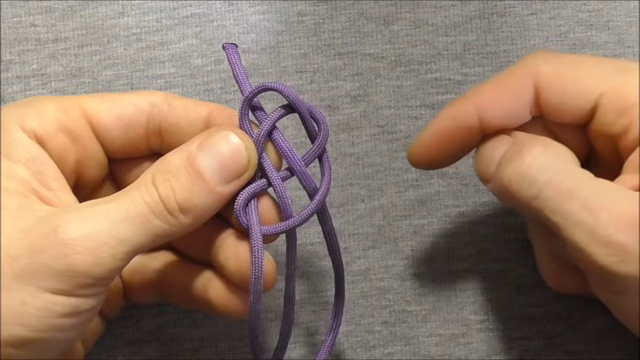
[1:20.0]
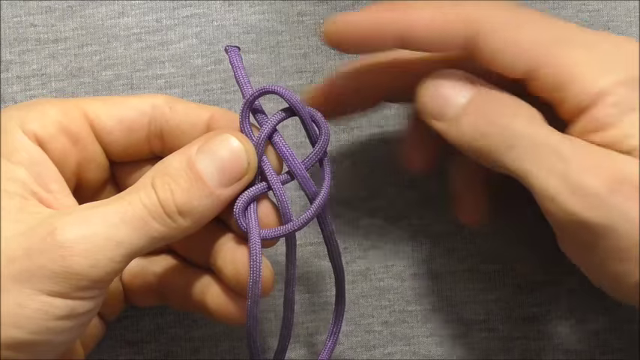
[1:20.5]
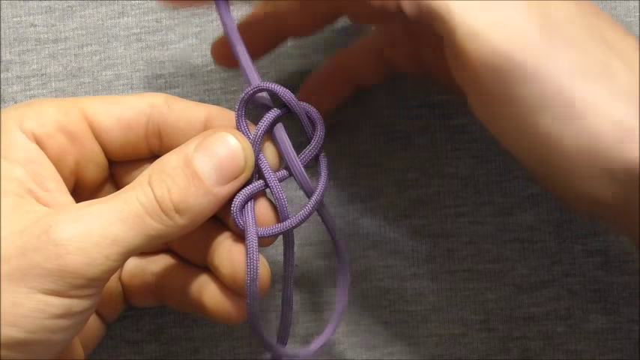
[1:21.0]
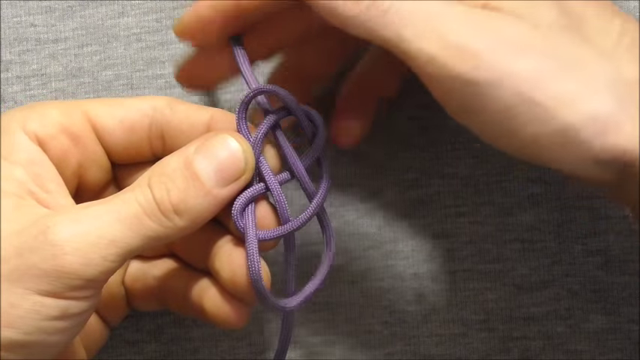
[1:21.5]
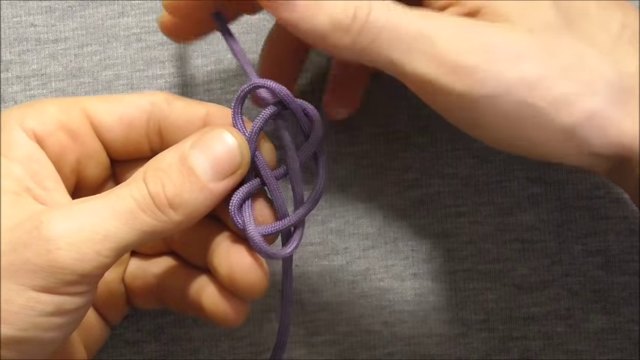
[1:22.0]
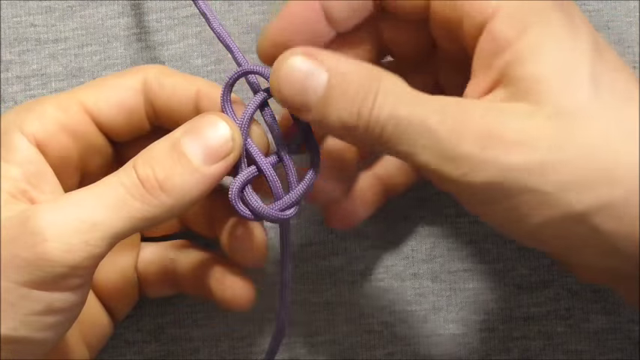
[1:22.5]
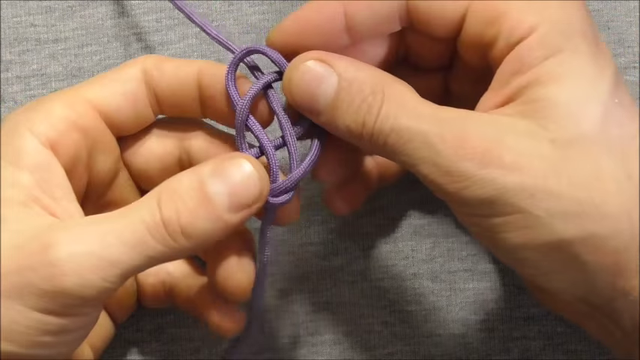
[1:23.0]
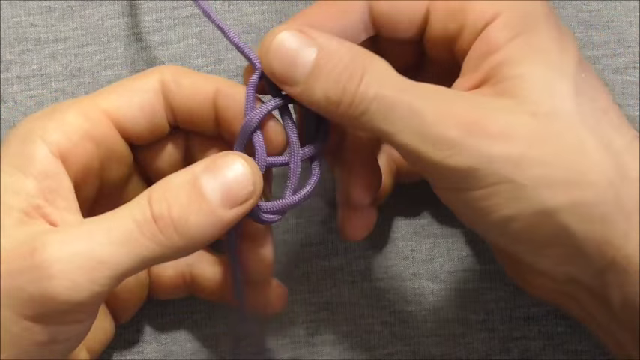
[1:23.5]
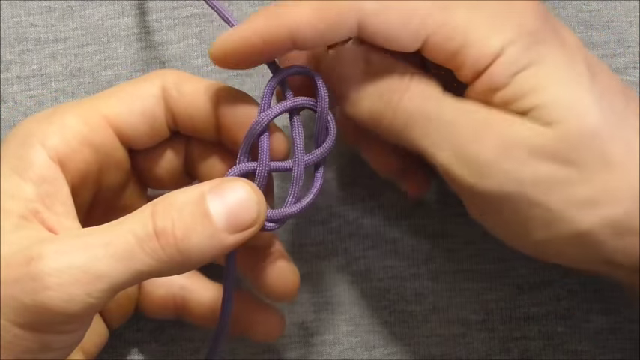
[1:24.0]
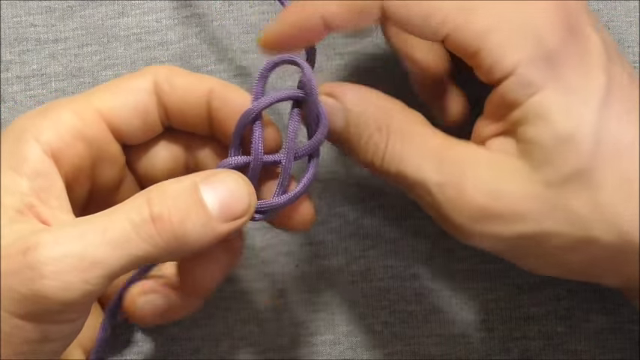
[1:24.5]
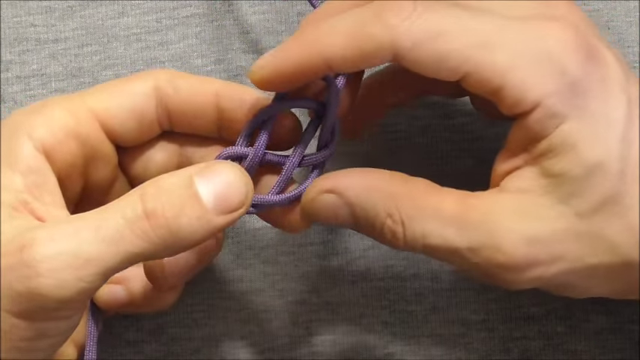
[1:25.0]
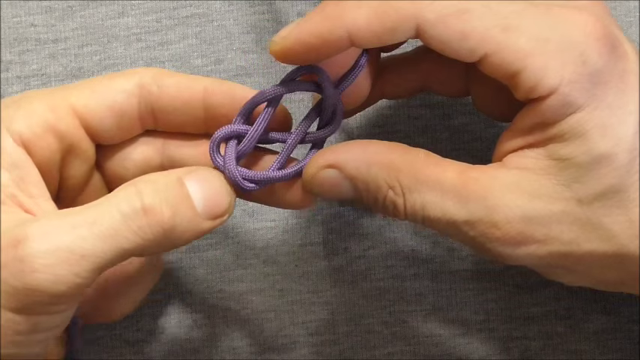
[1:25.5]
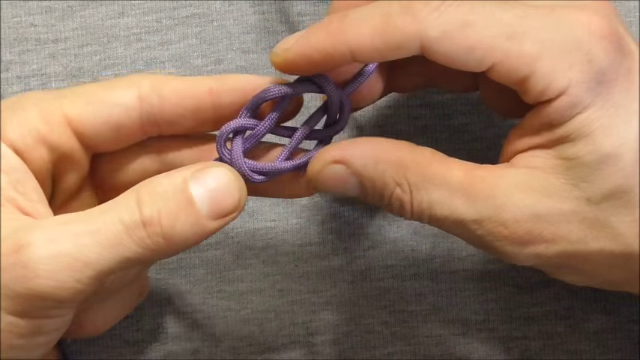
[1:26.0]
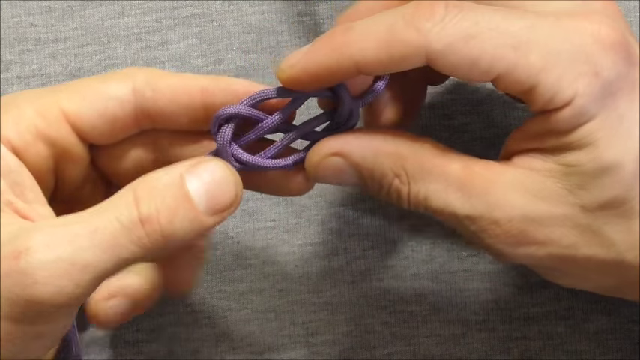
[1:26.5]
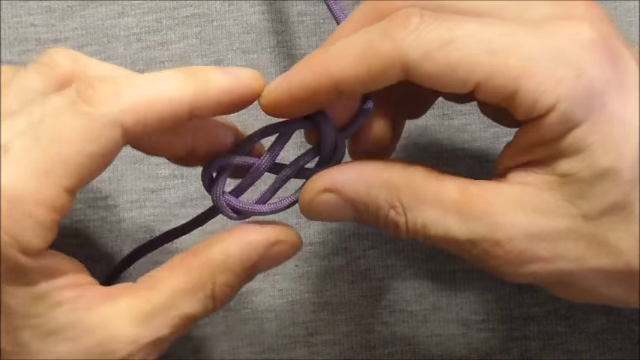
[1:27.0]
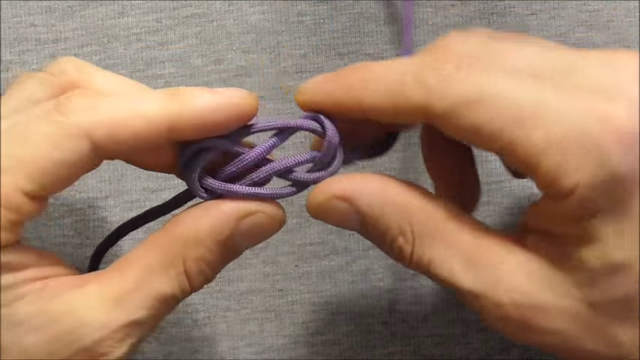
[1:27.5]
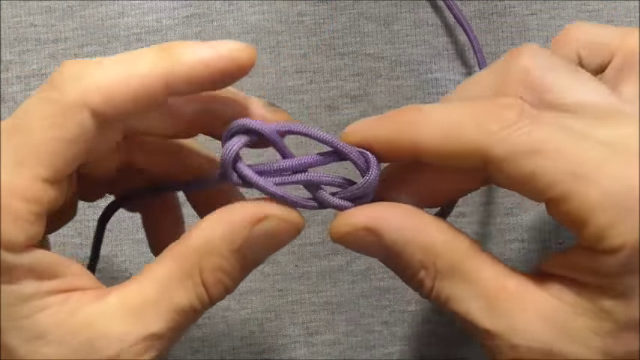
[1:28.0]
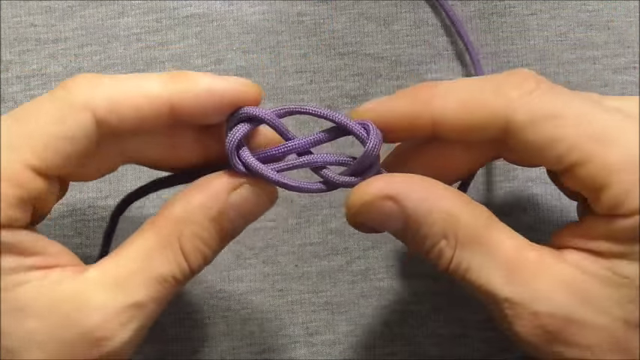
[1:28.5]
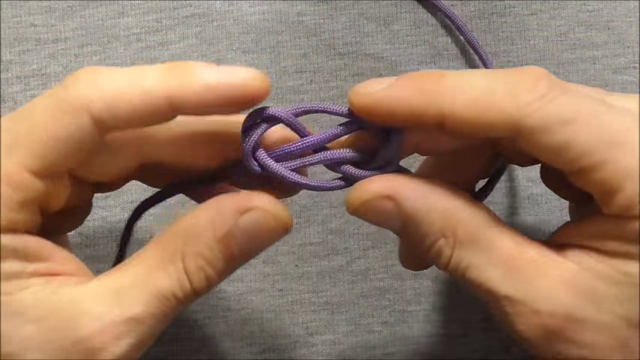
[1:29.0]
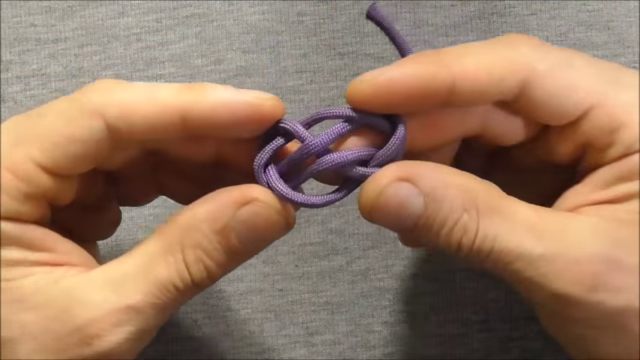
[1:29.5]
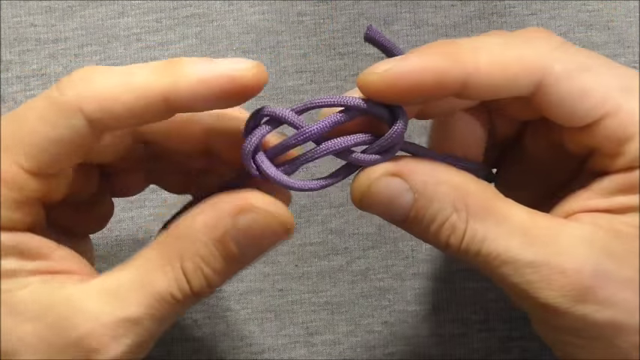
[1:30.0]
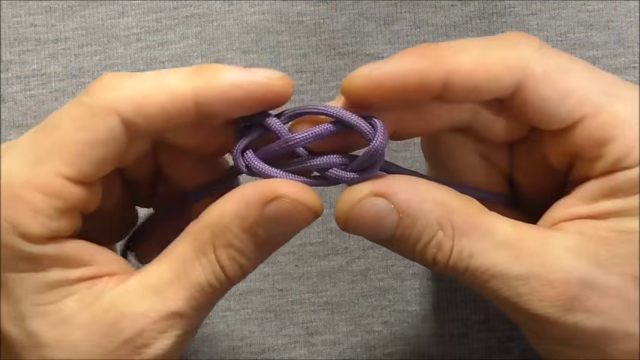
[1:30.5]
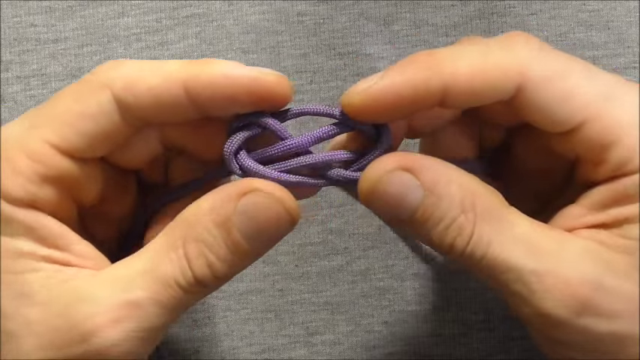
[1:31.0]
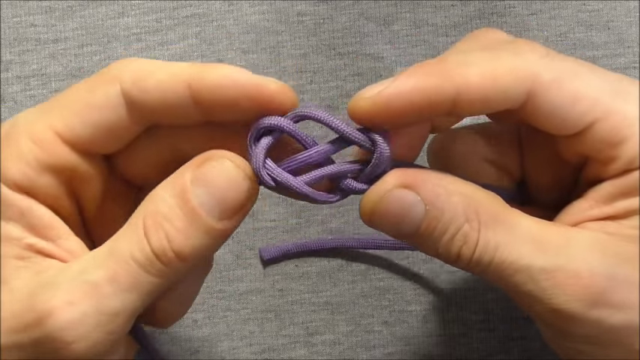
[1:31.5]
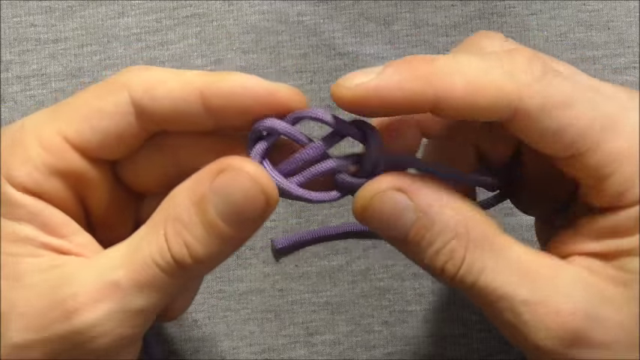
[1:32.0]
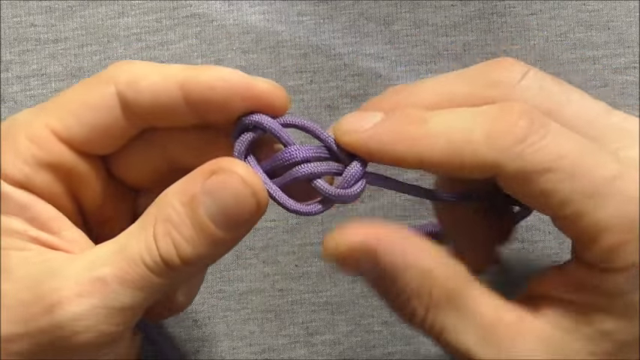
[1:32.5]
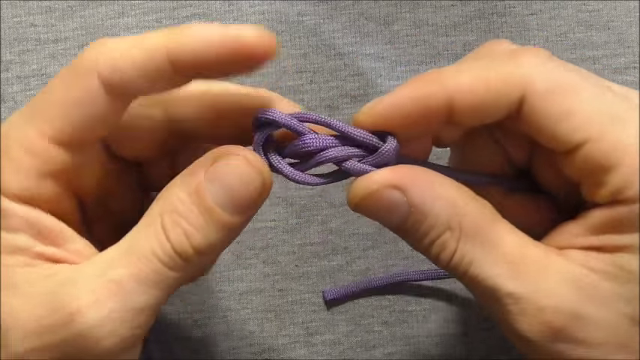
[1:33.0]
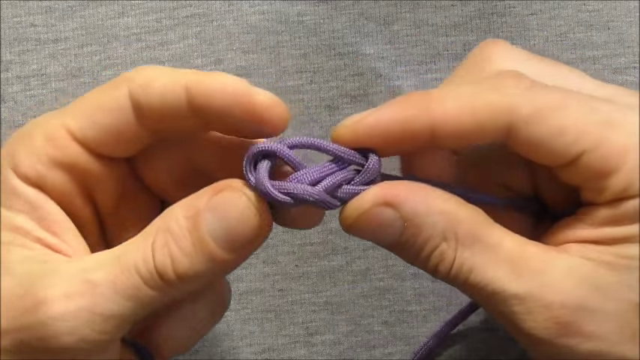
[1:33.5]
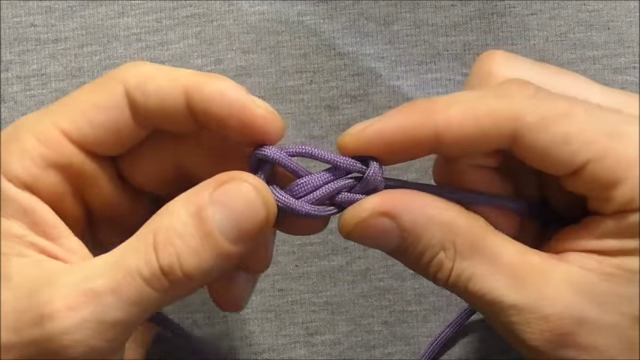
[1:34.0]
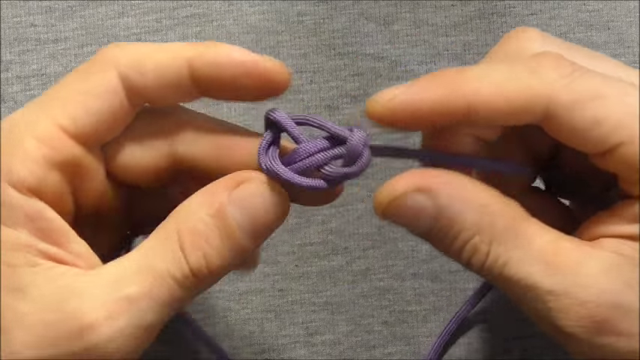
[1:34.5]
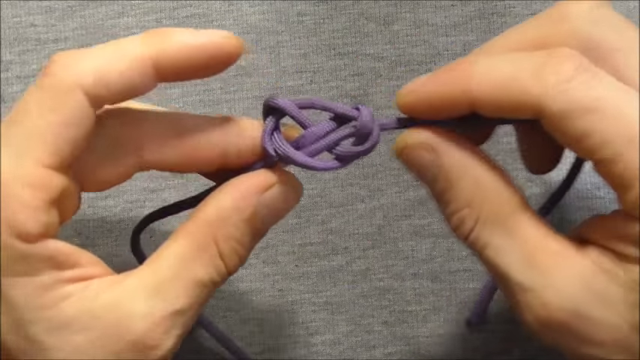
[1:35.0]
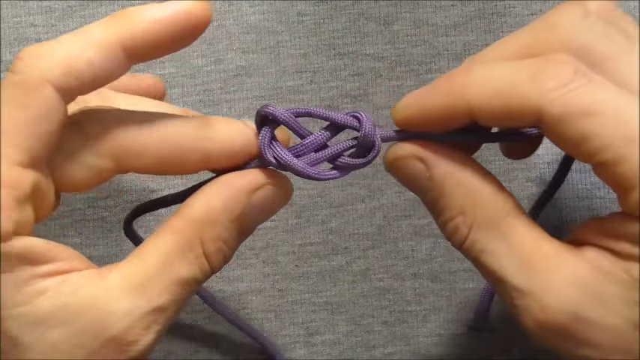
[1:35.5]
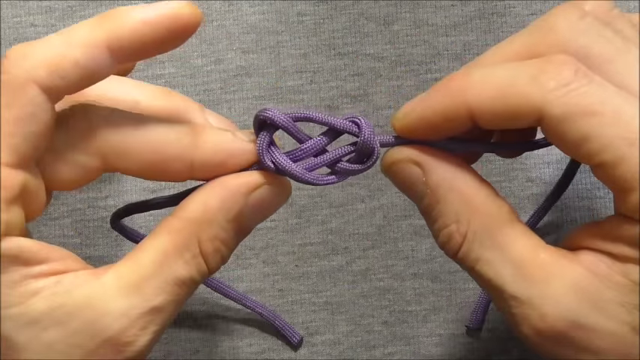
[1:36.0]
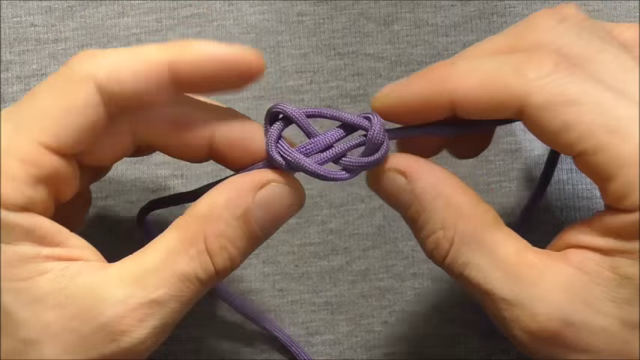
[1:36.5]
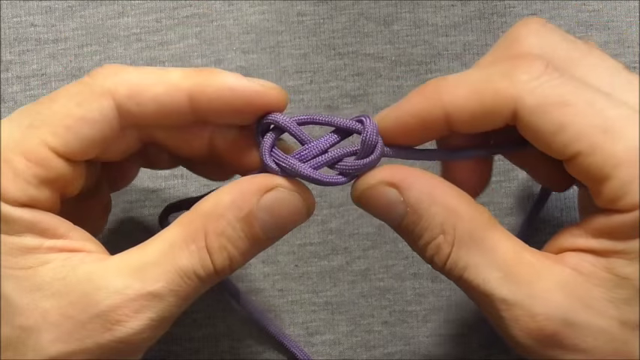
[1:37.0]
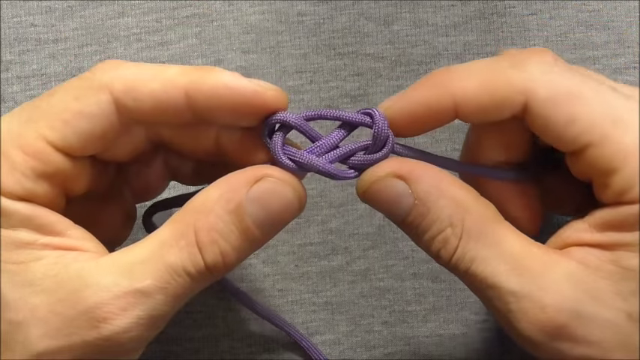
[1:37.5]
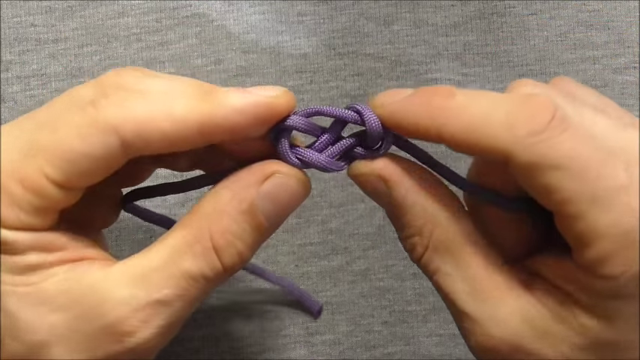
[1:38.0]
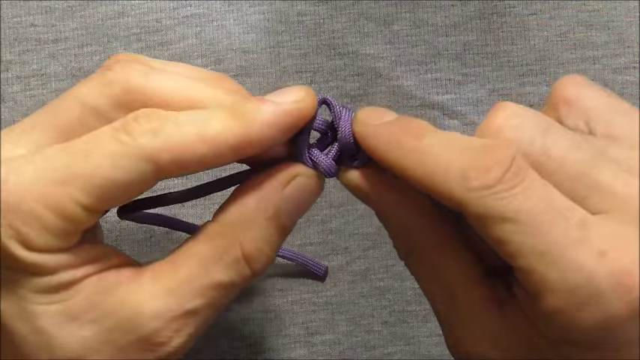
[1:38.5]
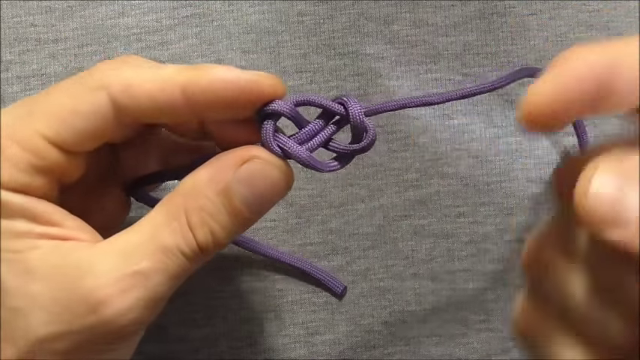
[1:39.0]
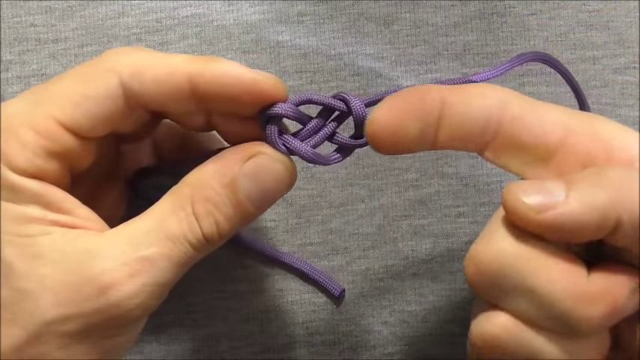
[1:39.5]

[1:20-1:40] A person's two hands create a complicated-looking loop from a deep purple, shoelace-like strip of fabric, against the backdrop of what looks like a grey woolen fabric covering a flat surface. The left hand holds the loop while the right hand pulls the end of one of the loops upwards. The loop looks like a double loop. The index fingers and thumbs of both hands carefully form the loop into an oval, showing the result of the looping. The two hands continue working together to gradually tighten the loop, with the trailing ends hanging from the left and right sides. The fingers push the loop together to make it smaller. The shadow of the fingers is visible on the grey fabric in the background.